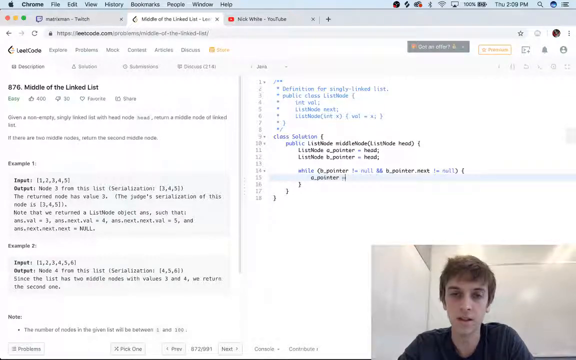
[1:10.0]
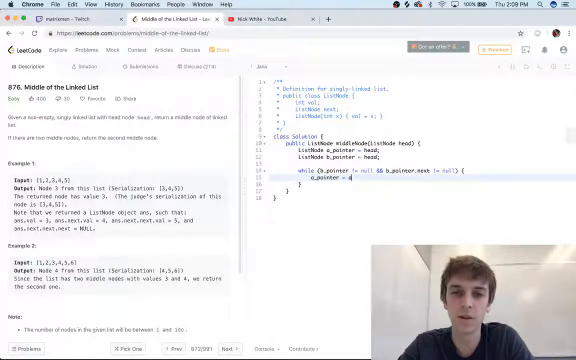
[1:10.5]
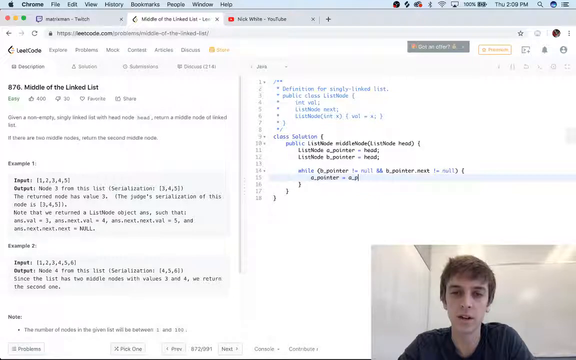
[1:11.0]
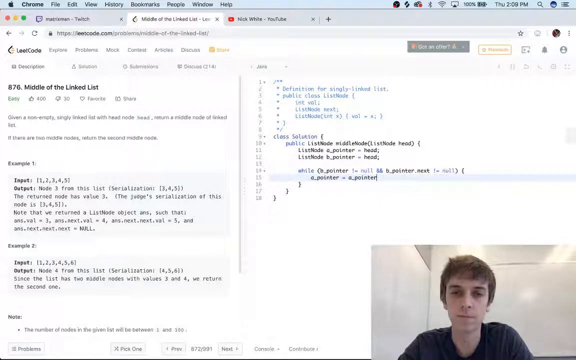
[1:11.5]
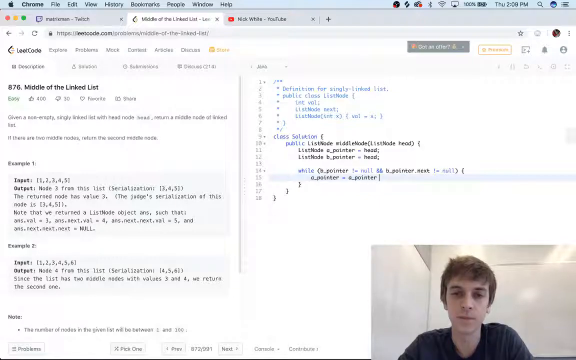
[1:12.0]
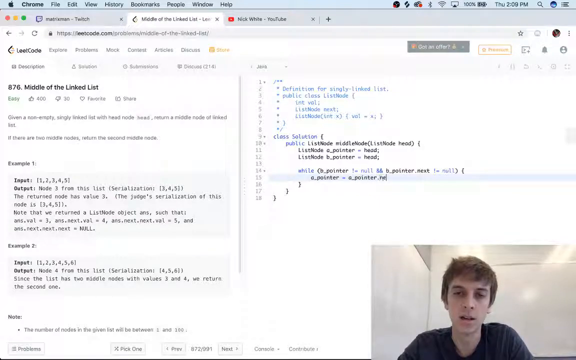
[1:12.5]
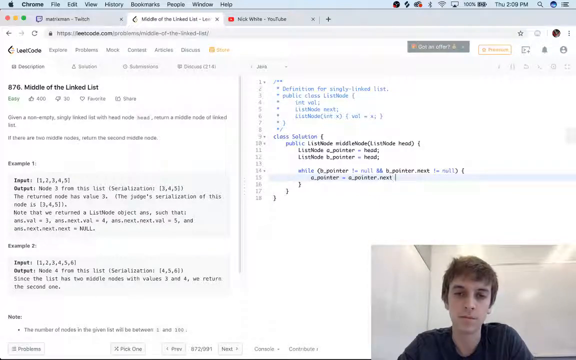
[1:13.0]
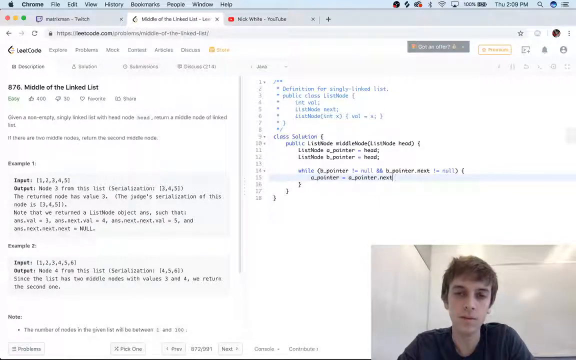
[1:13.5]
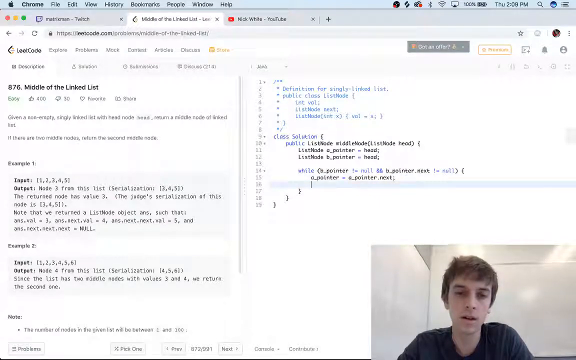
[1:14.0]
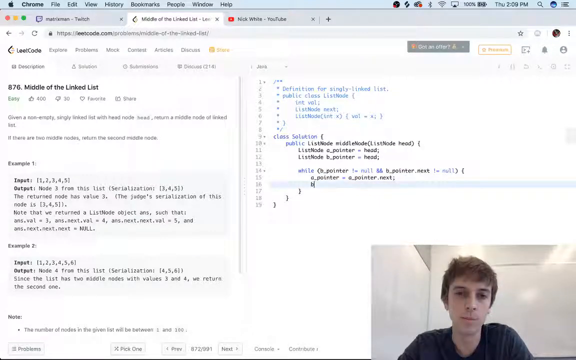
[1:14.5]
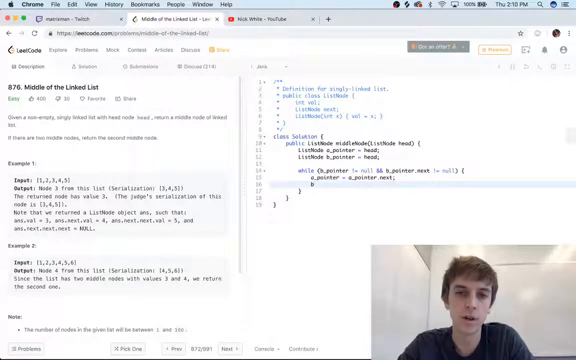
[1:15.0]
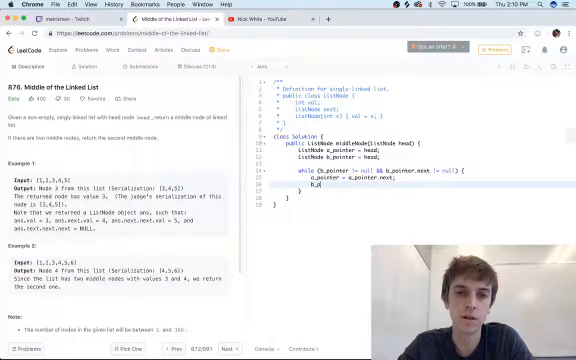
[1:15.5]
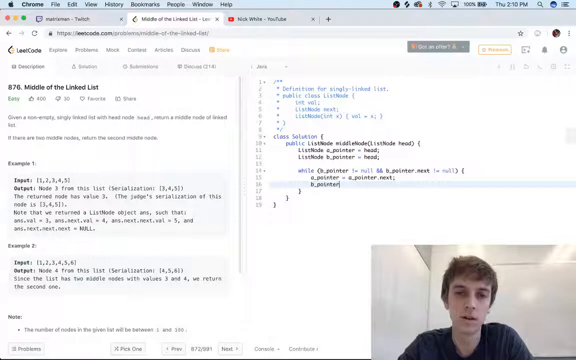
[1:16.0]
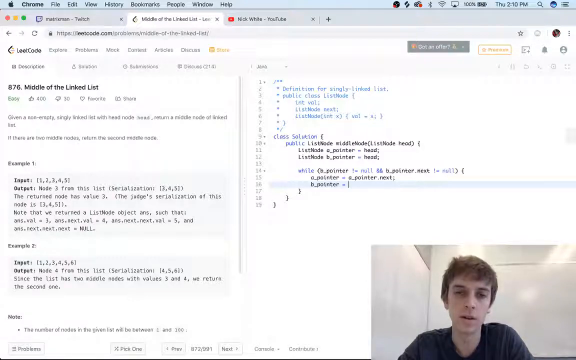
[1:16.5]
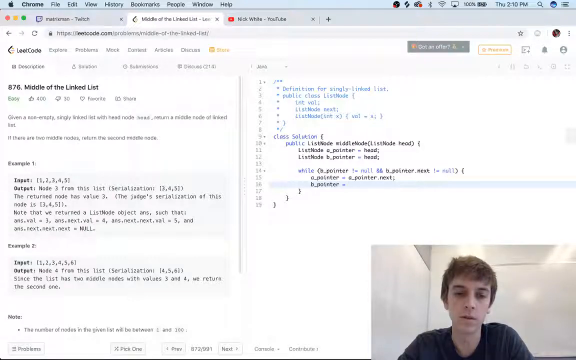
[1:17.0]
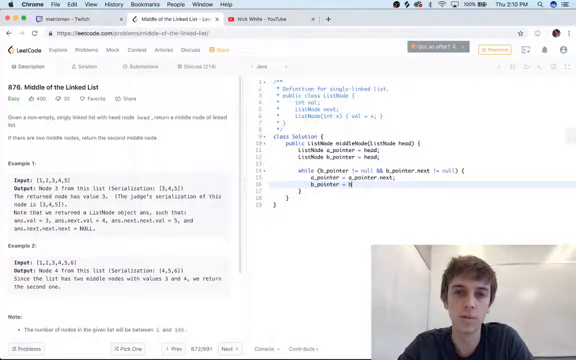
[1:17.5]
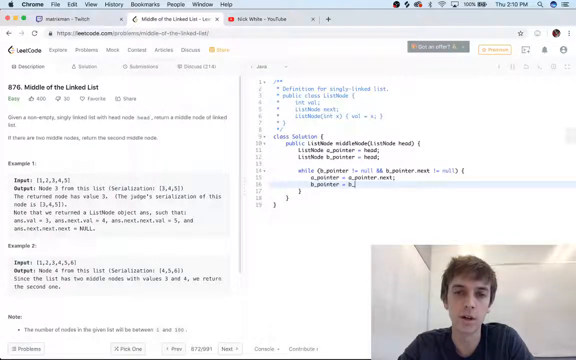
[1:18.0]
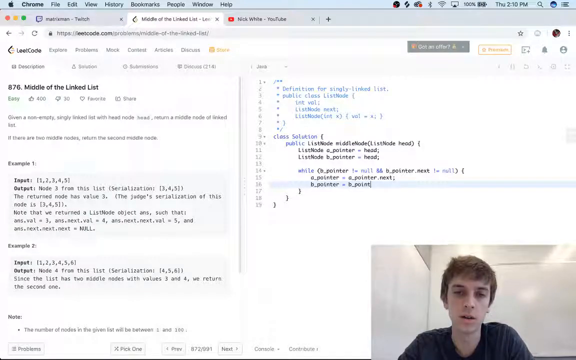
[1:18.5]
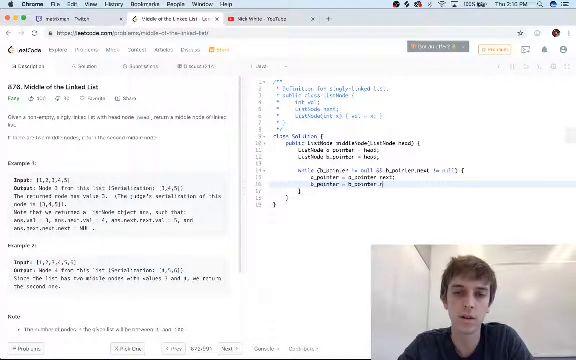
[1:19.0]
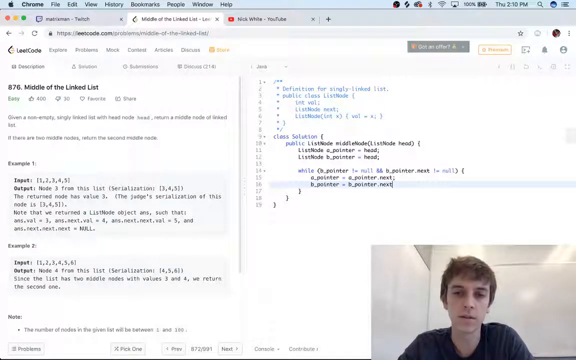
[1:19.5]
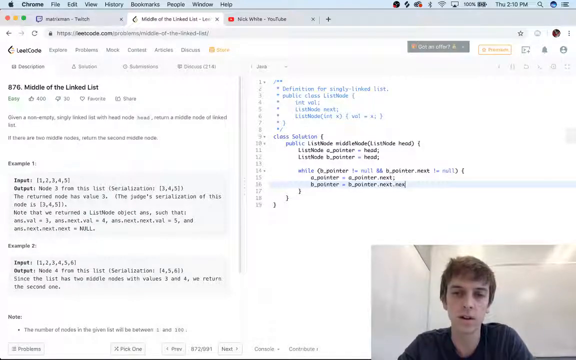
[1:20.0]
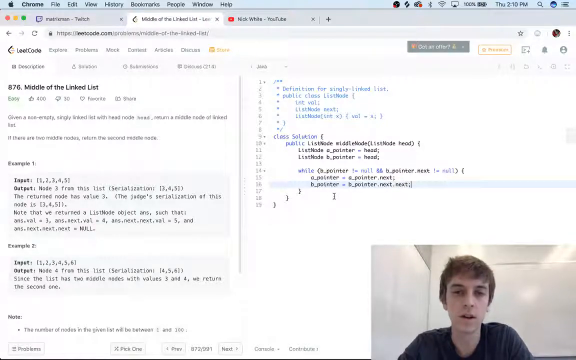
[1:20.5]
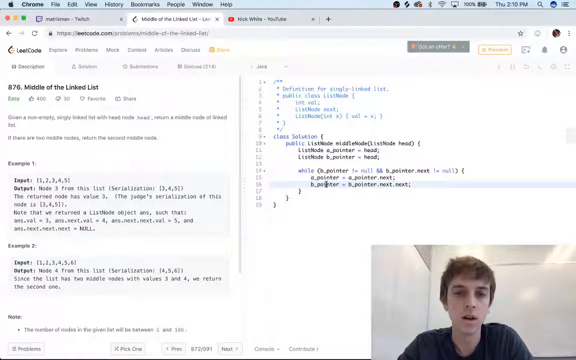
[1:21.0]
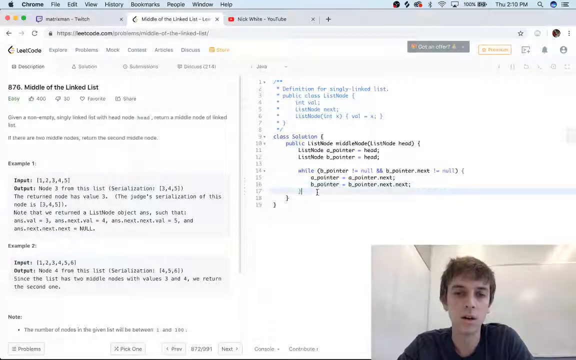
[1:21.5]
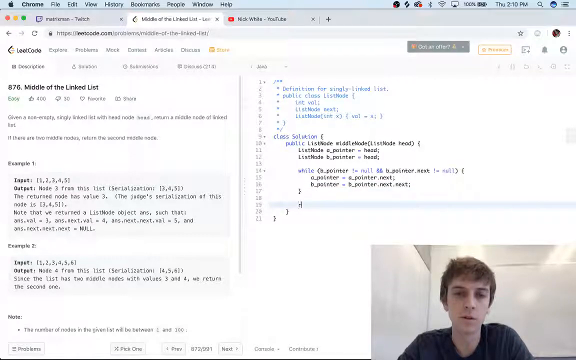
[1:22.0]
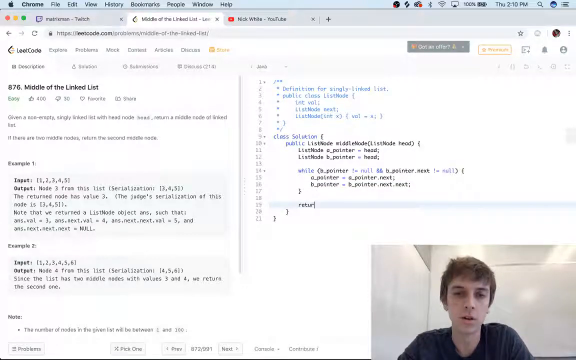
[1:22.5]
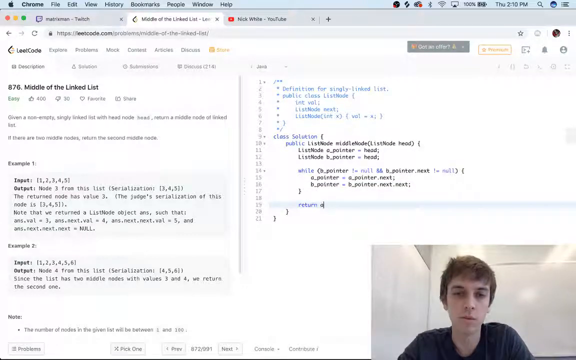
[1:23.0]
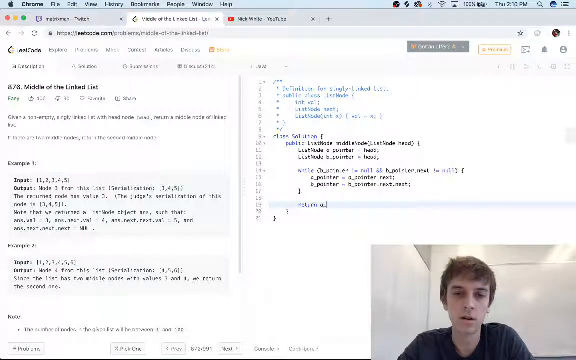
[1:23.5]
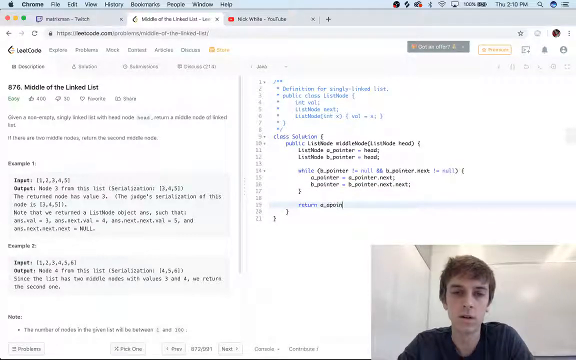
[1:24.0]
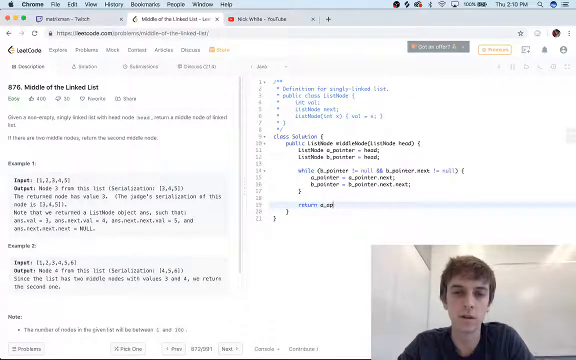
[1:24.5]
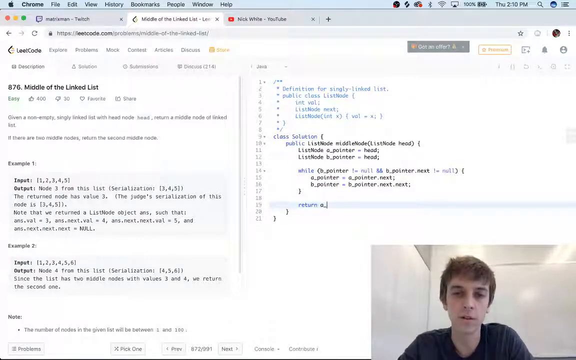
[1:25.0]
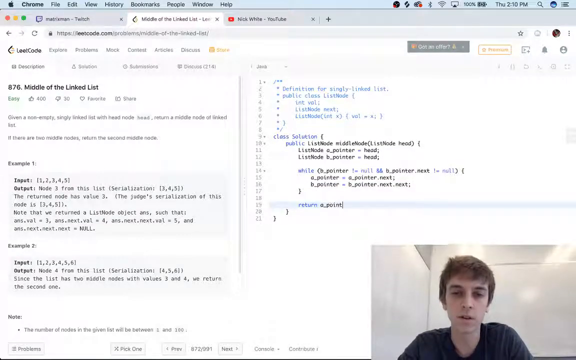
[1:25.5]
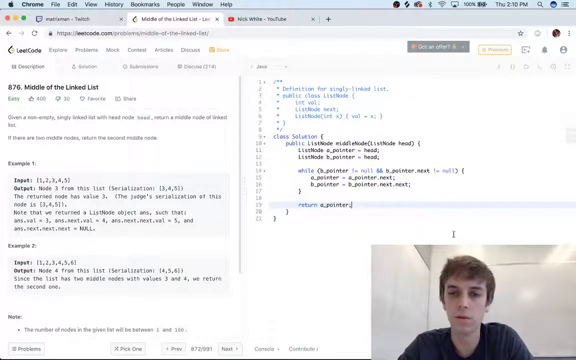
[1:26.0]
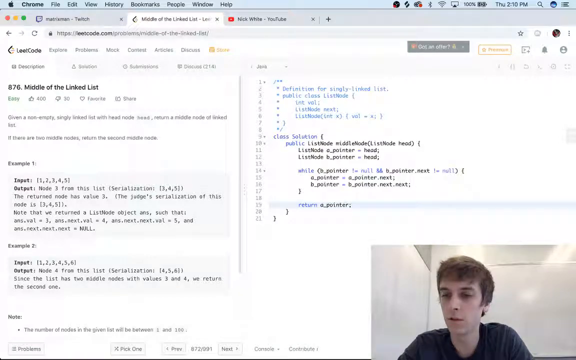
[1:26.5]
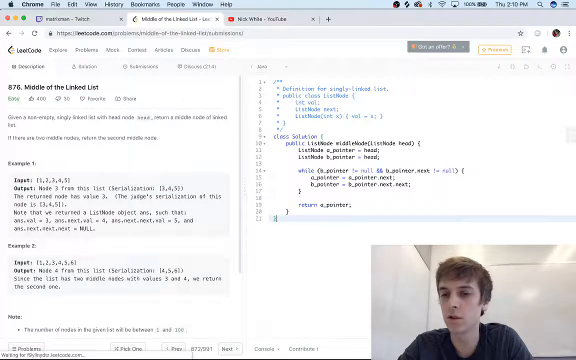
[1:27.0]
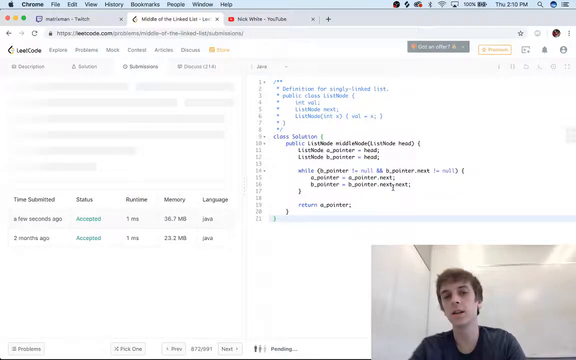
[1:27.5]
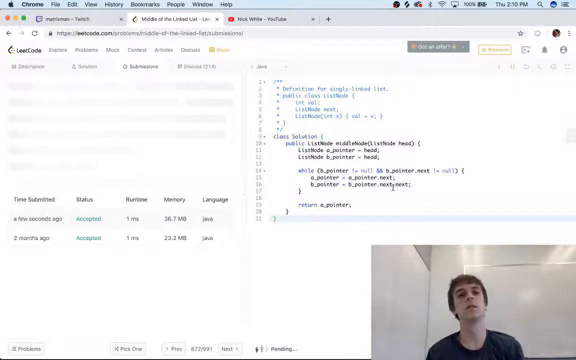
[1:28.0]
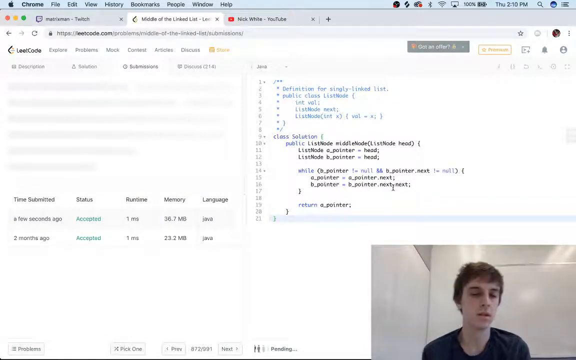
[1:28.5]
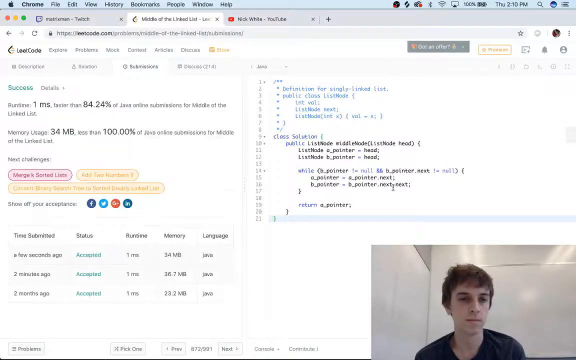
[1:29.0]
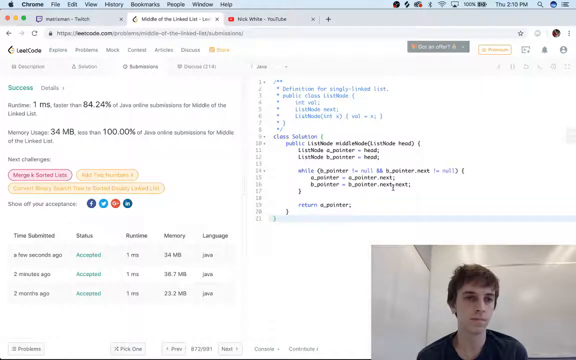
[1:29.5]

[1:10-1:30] The speaker keeps typing code. Line 15 reads "a pointer - a pointer.next" with two semicolons. On line 16 he types "b pointer - b pointer.next.next" with one semicolon, closes a bracket on line 17, skips line 18, and on line 19 types "return a_pointer" with two semicolons. On line 20 he closes the bracket, then closes another bracket on line 21. He presses enter and leans back in a relaxed manner. The camera shakes while he types, possibly because he is typing intensely or because the camera is not firmly attached. When he submits his code, the left side of the web page changes to a box with sections marked "Time Submitted", "Status", "Runtime", "Memory", and "Language".